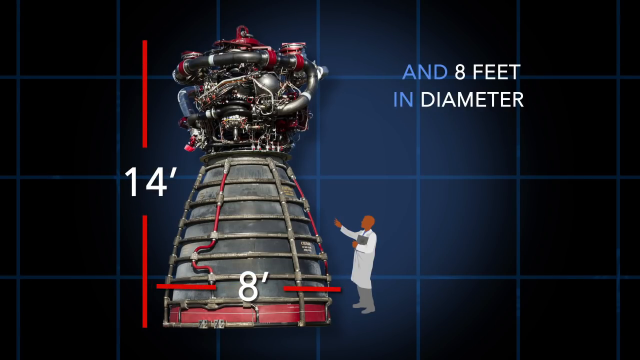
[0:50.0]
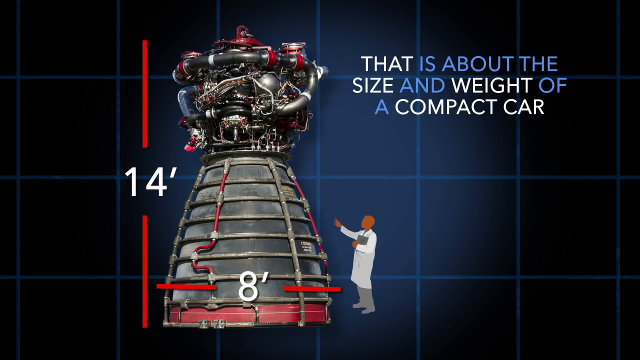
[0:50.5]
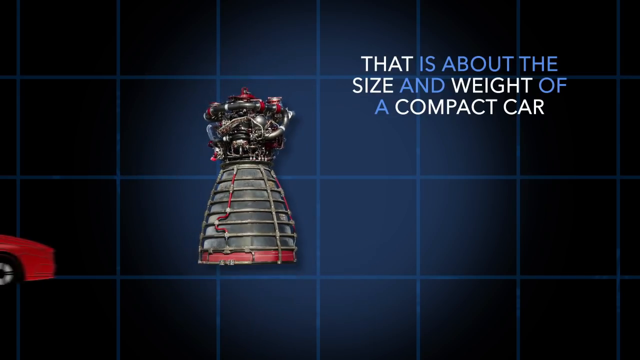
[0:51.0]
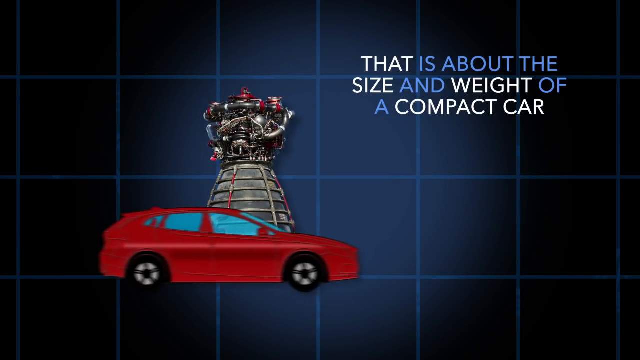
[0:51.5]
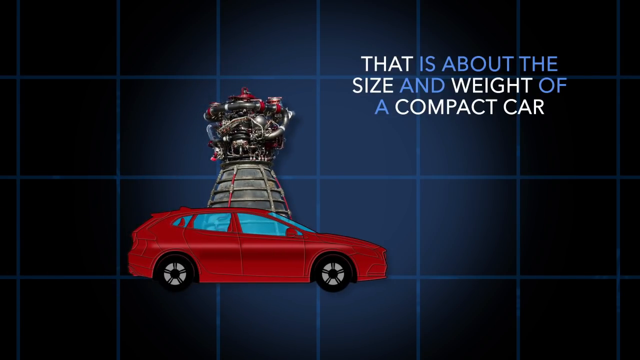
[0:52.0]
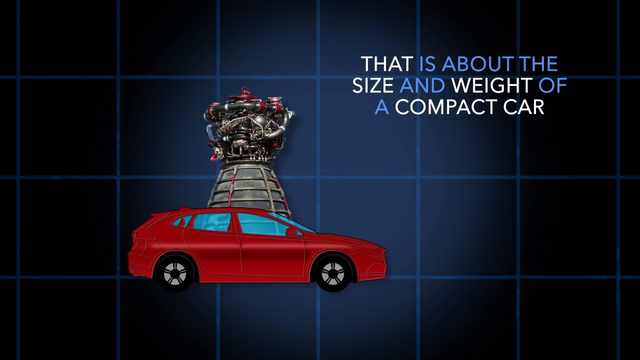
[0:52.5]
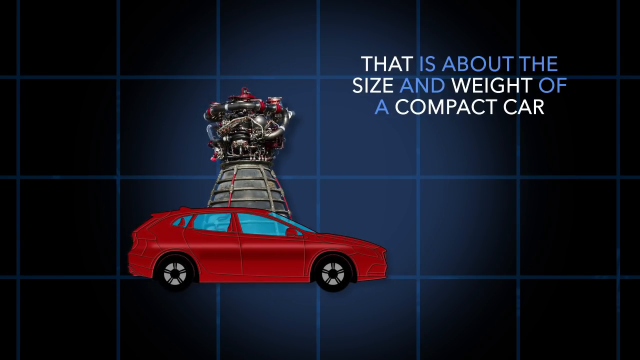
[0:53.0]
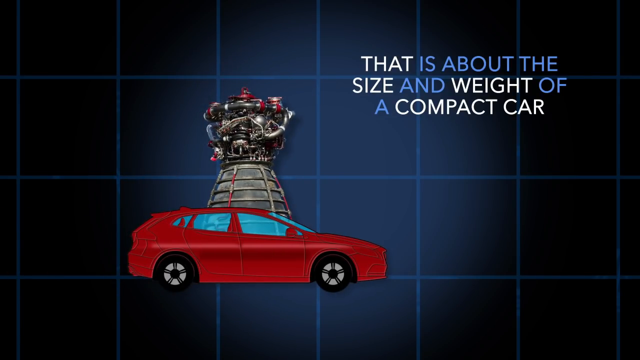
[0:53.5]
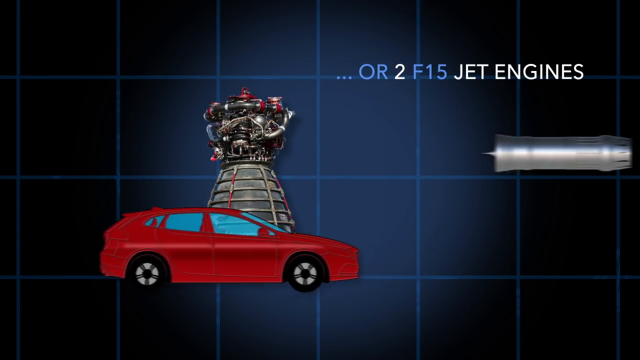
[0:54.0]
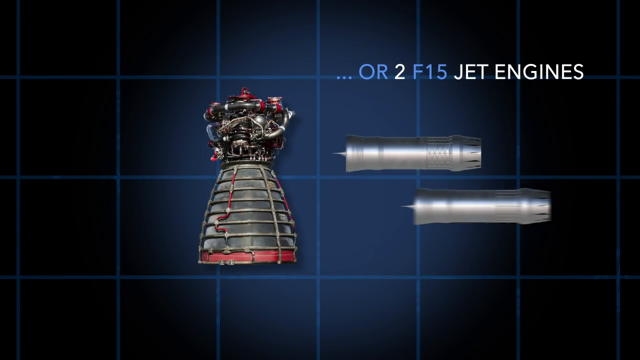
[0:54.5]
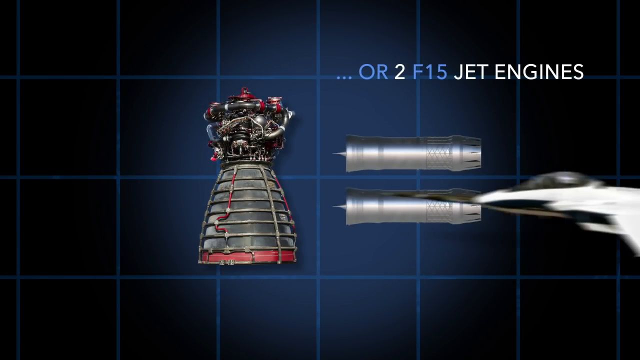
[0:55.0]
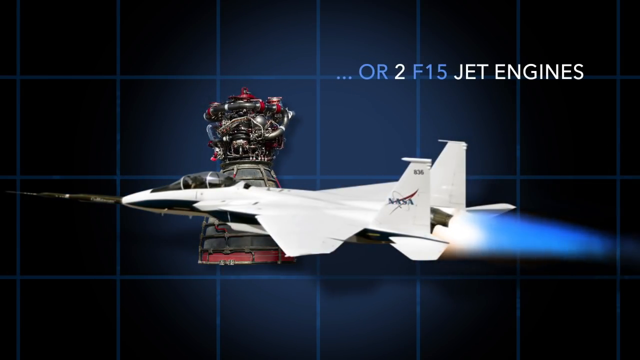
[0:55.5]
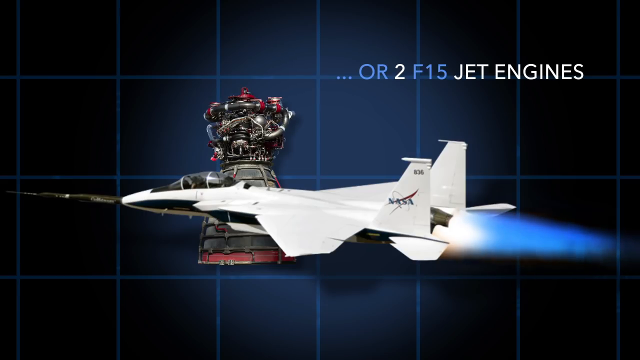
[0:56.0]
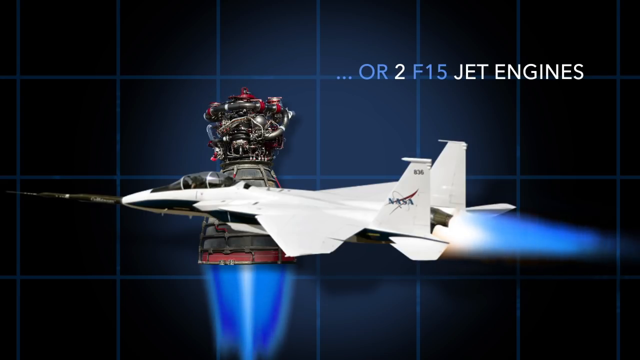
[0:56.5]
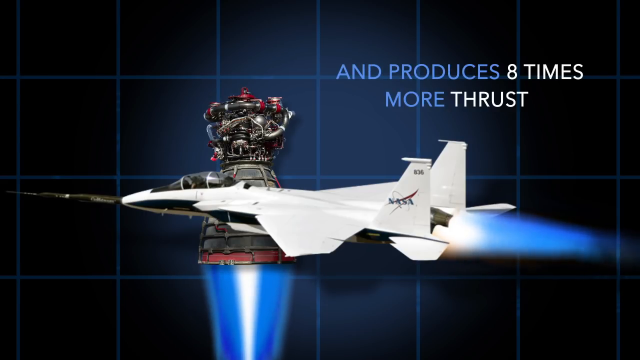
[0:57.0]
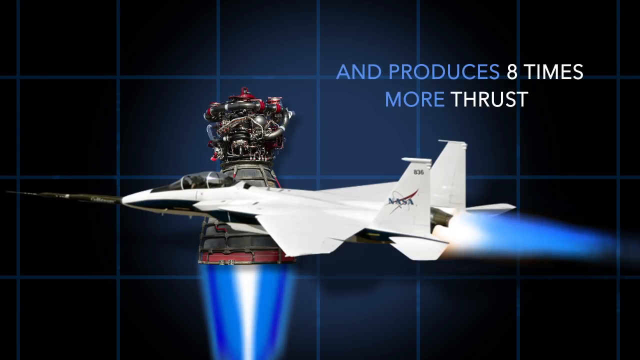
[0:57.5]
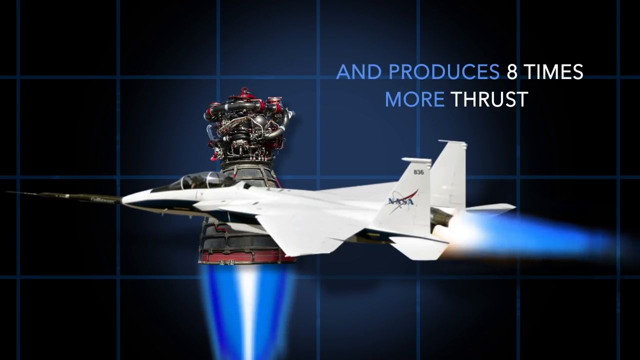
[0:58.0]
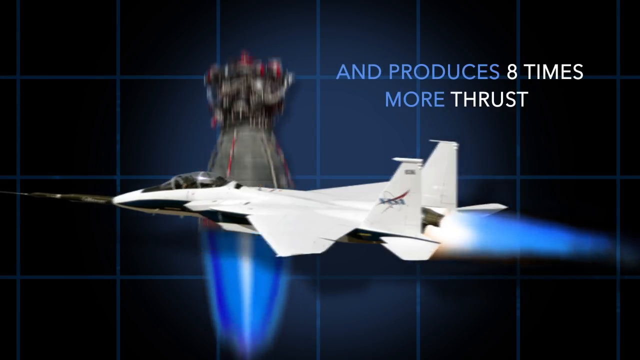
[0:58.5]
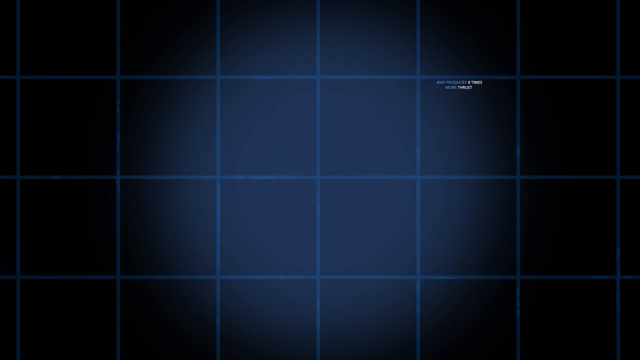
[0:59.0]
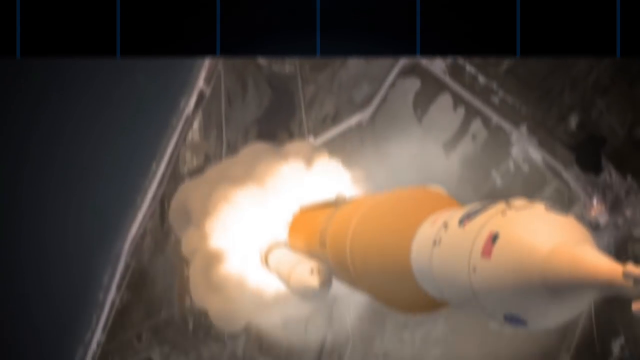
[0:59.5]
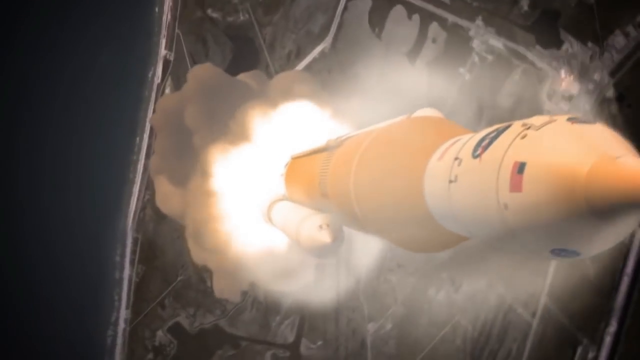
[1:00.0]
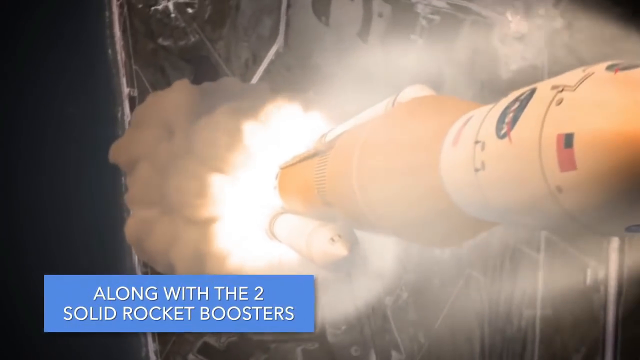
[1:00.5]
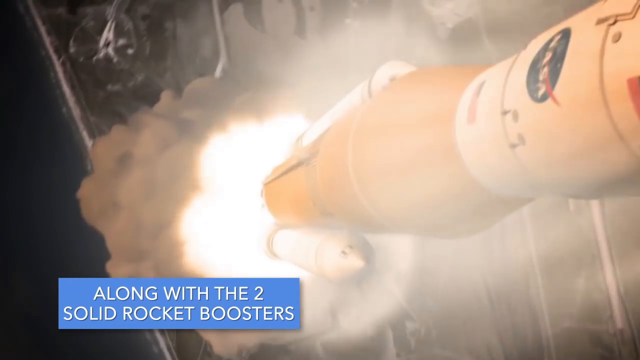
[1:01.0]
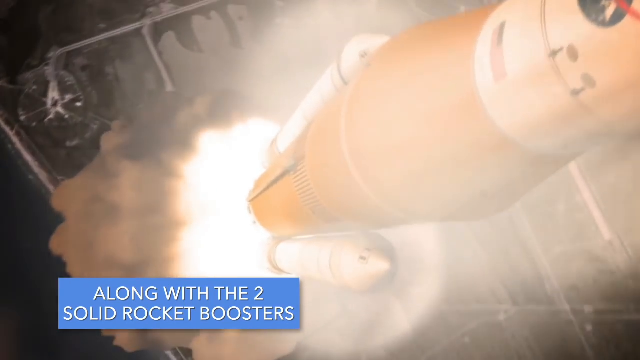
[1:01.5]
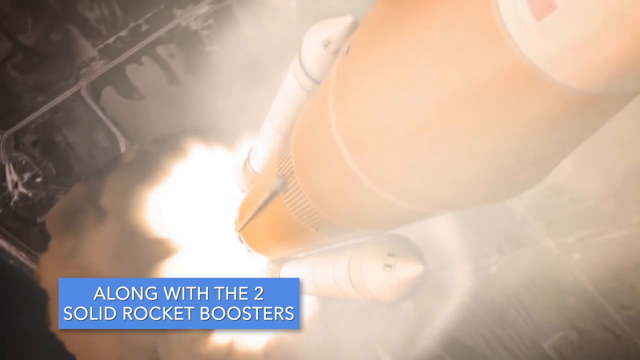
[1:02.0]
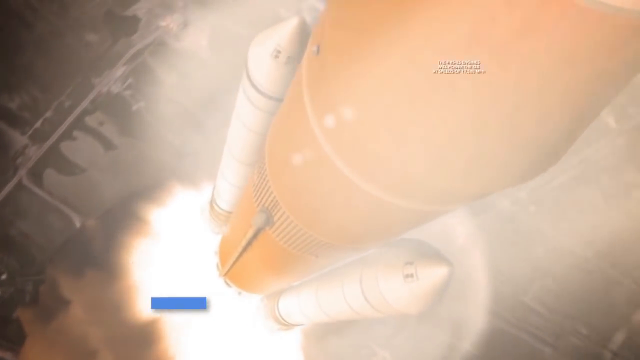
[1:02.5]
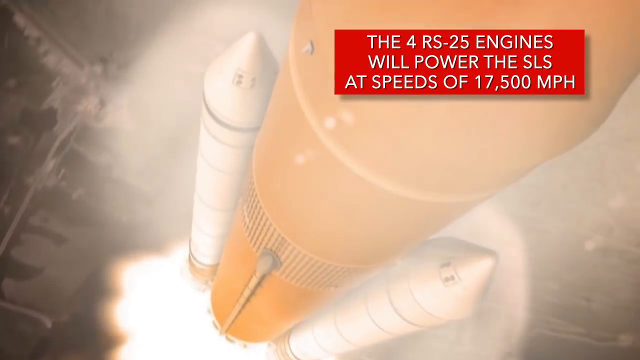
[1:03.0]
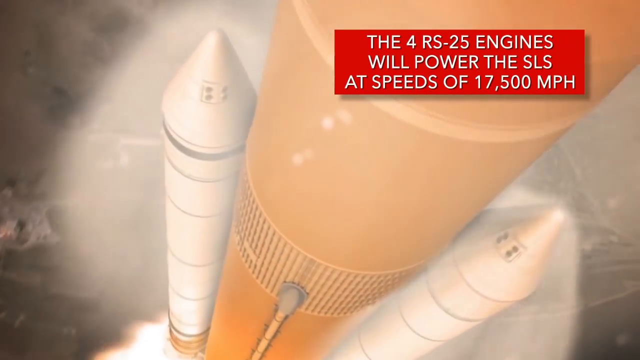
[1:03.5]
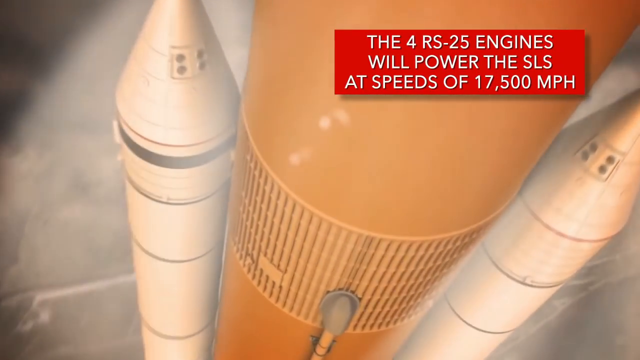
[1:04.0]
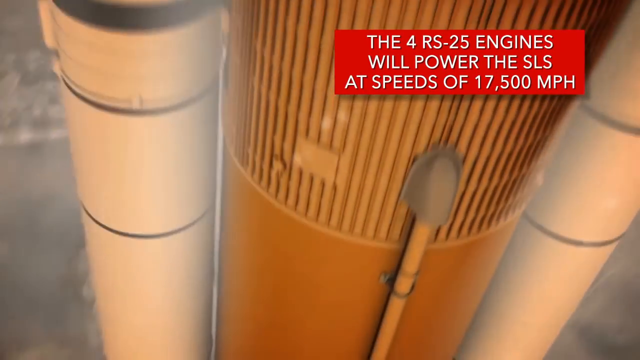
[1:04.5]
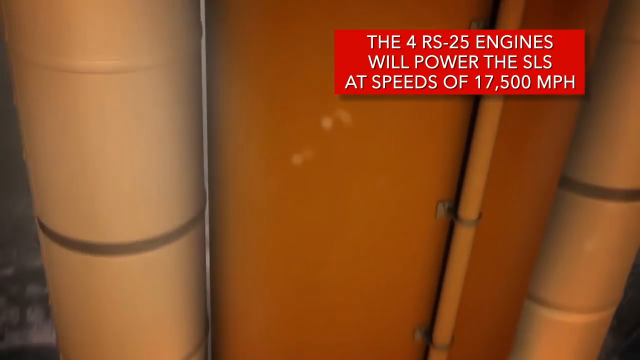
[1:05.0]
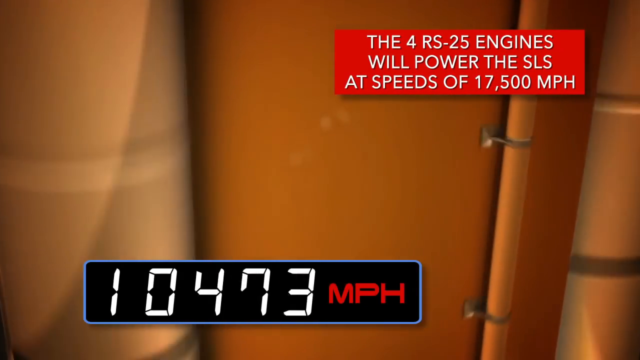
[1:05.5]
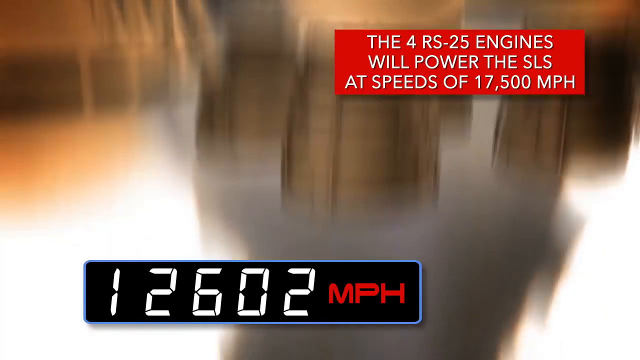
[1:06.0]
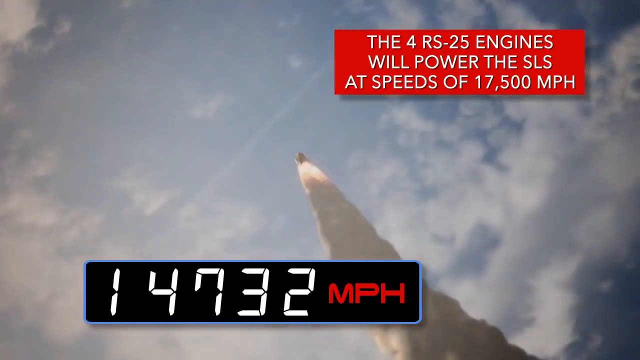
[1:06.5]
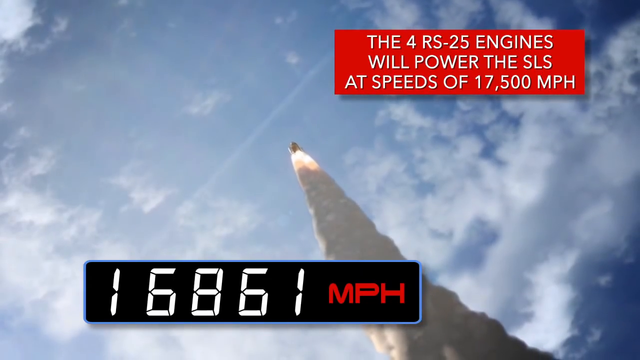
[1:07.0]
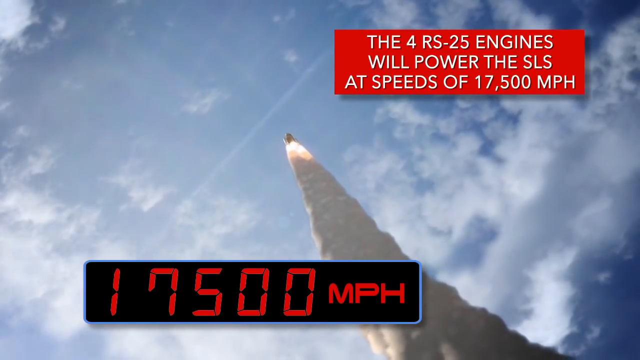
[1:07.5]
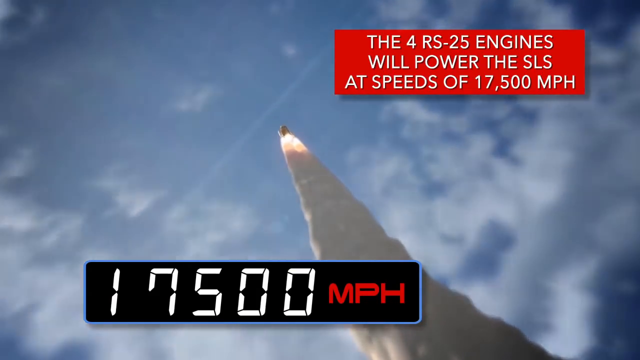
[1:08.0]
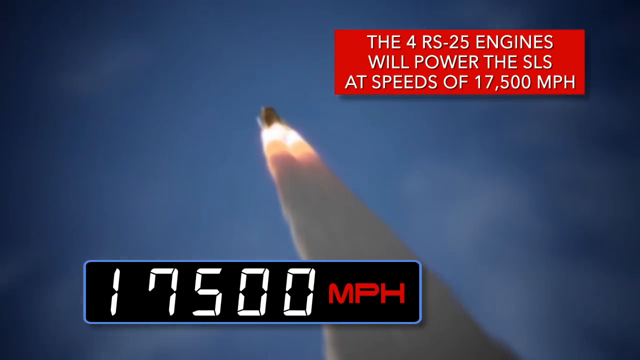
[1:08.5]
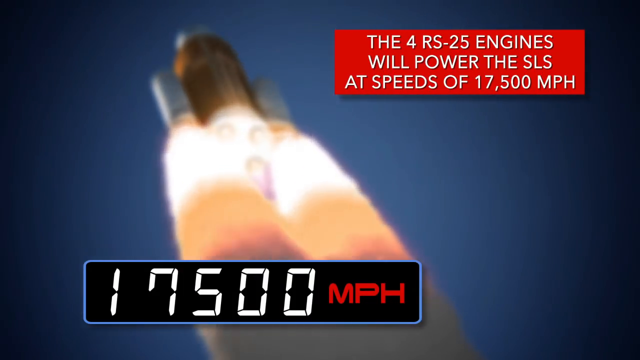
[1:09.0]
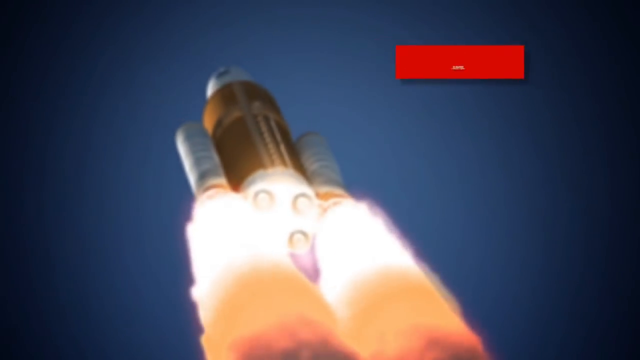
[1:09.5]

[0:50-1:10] A rocket engine appears on the left with a cartoonish illustrated man standing beside it, and the graphic indicates the rocket is 8 feet wide and 14 feet tall. White and blue text at the top right reads "that is about the size and weight of a compact car." Next comes an image of a white jet with black trim, its engine lit with fire coming out of the back; one person or humanoid is visible in the cockpit. Blue and white text at the top right reads "and produces eight times more thrust." The view changes to a large orange and white rocket with a NASA logo and two white side boosters. At the bottom left, white text on a blue banner or background reads "along with the two solid rocket boosters."